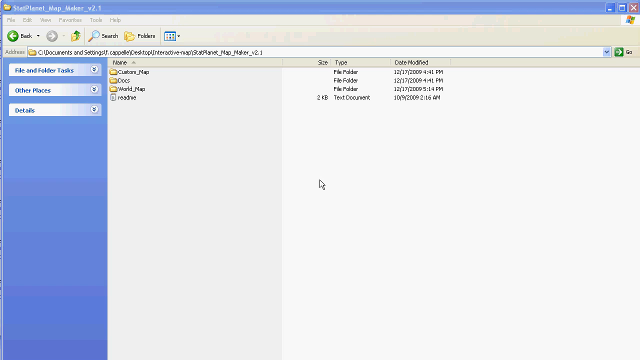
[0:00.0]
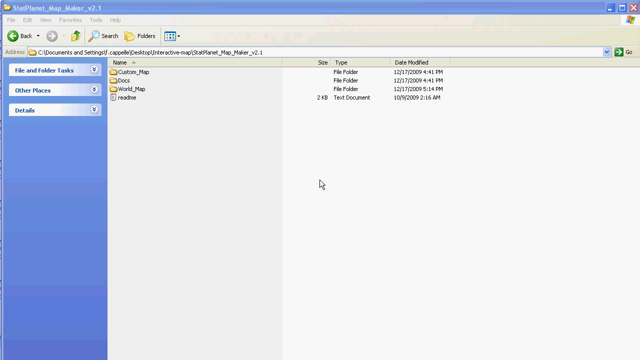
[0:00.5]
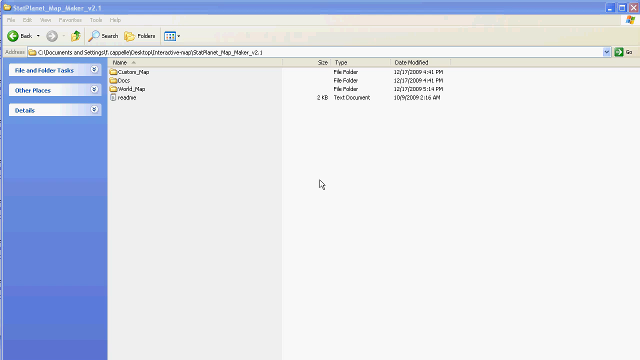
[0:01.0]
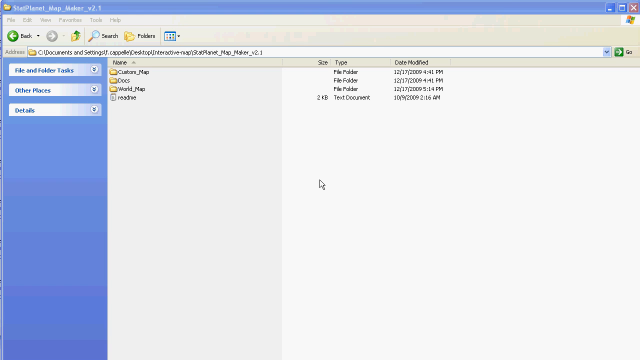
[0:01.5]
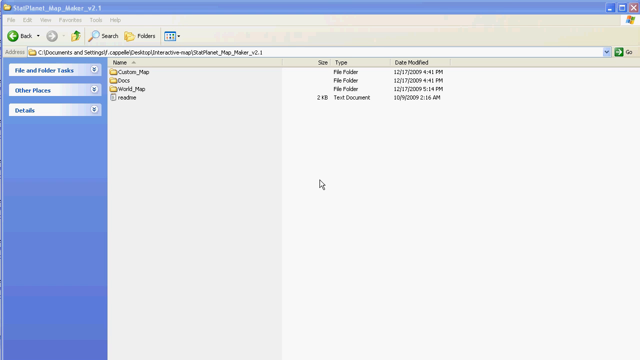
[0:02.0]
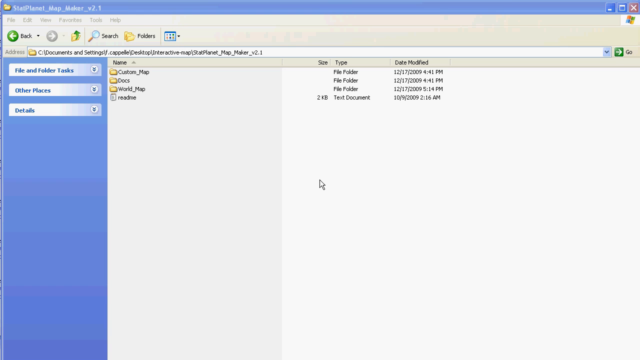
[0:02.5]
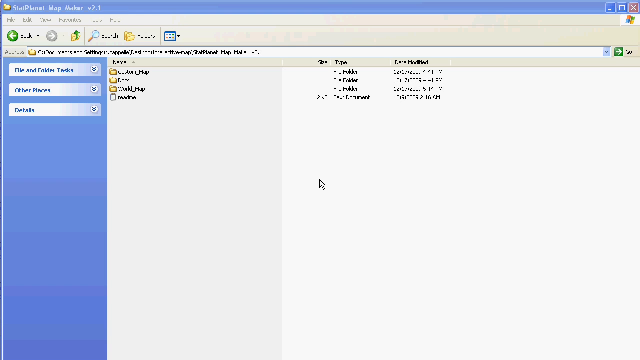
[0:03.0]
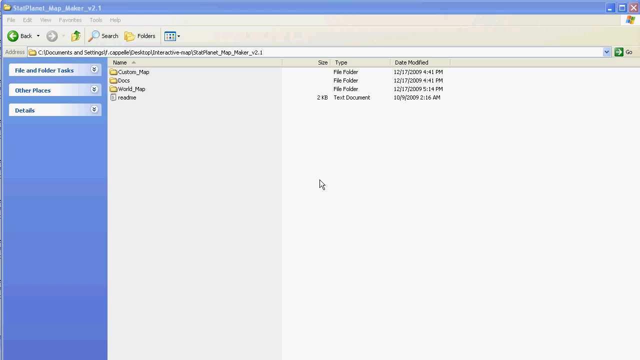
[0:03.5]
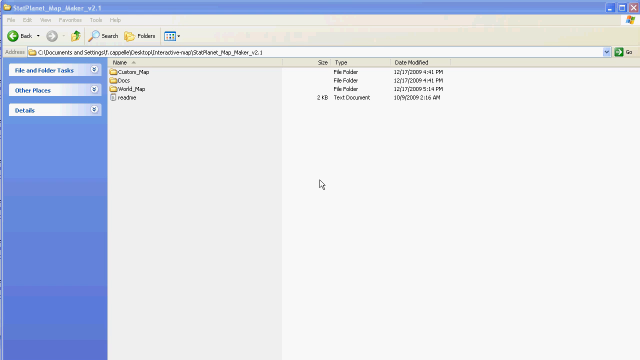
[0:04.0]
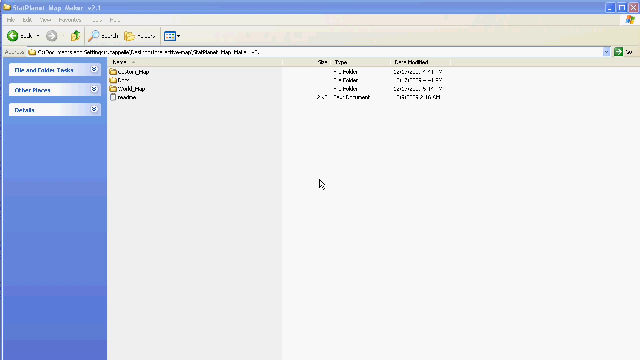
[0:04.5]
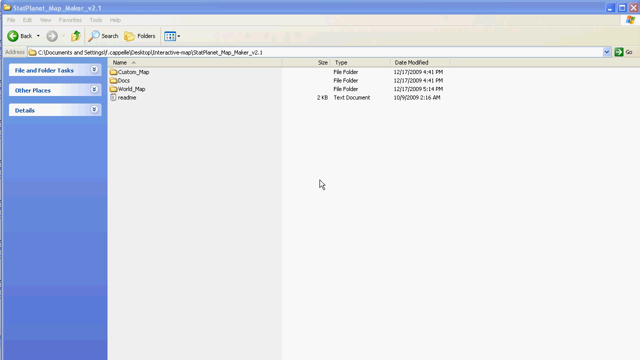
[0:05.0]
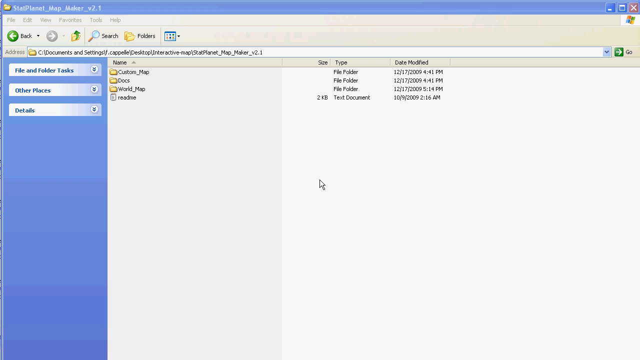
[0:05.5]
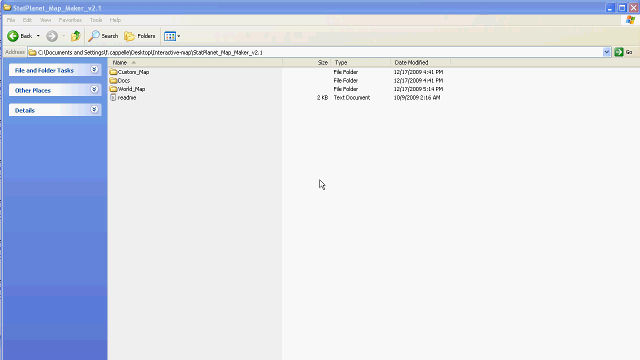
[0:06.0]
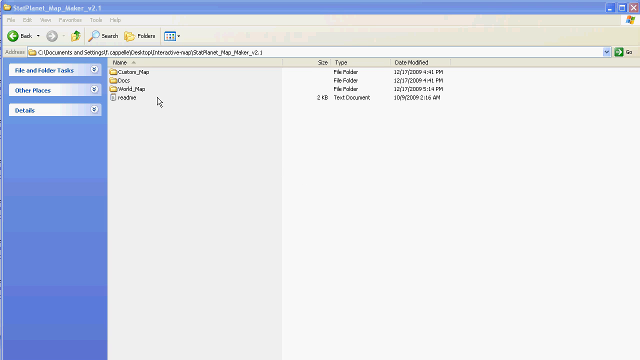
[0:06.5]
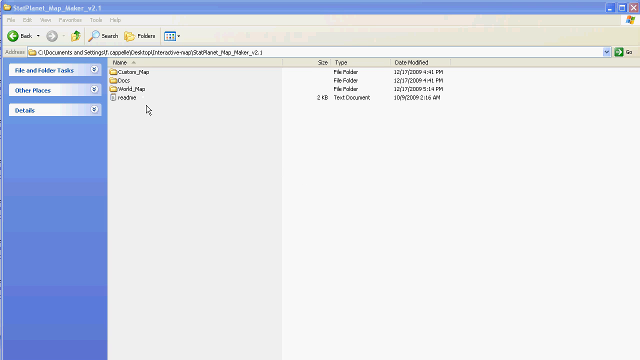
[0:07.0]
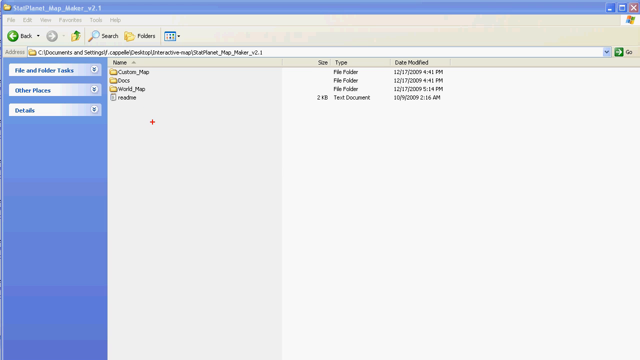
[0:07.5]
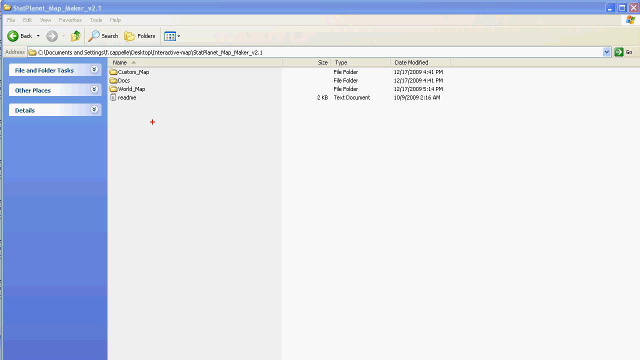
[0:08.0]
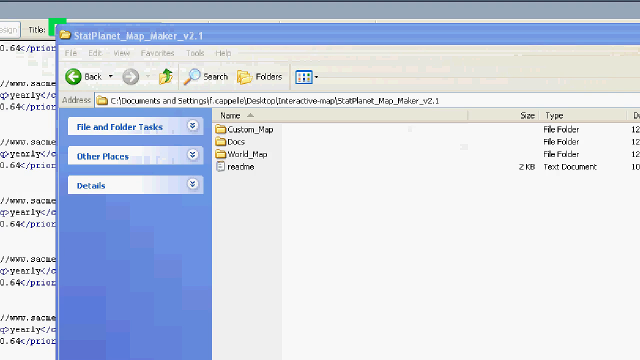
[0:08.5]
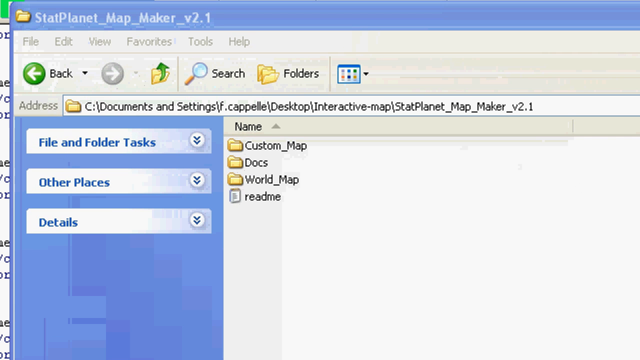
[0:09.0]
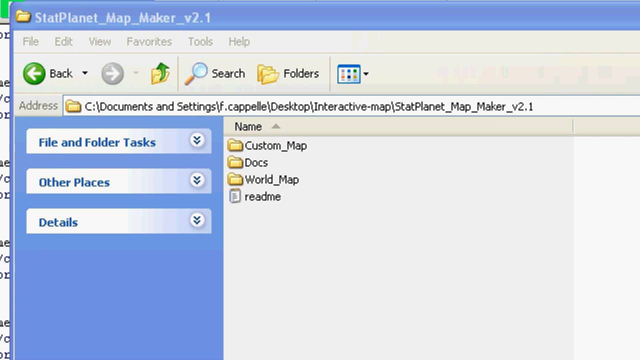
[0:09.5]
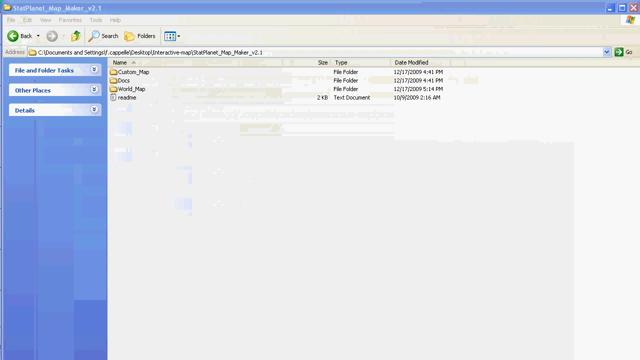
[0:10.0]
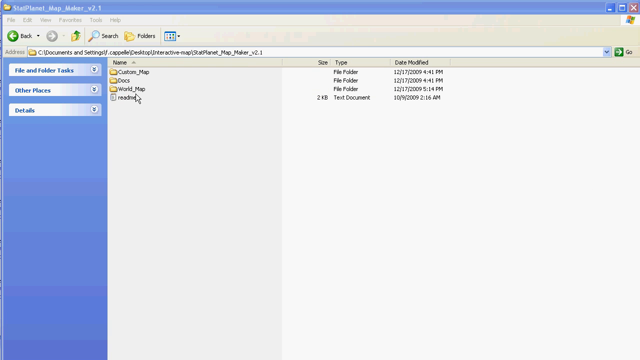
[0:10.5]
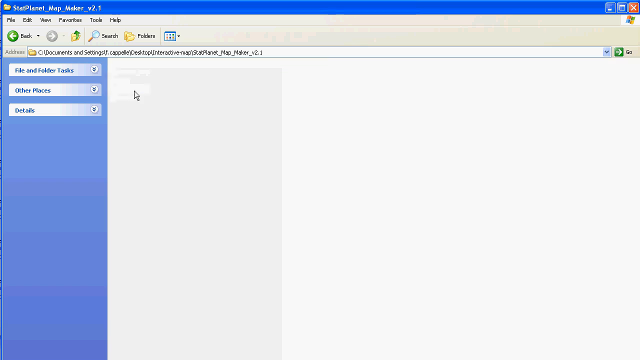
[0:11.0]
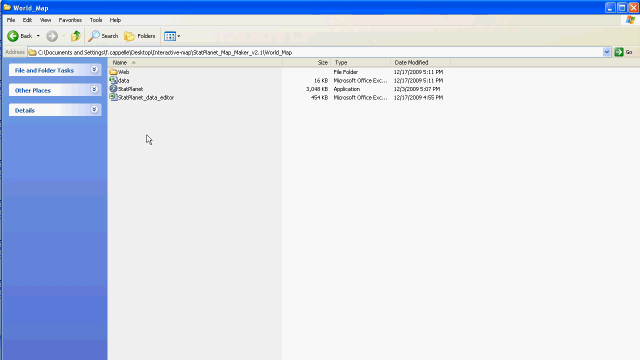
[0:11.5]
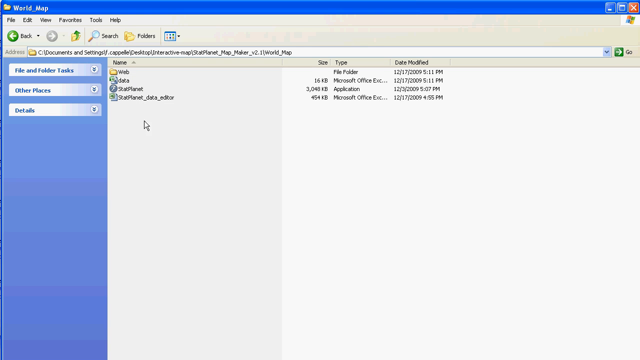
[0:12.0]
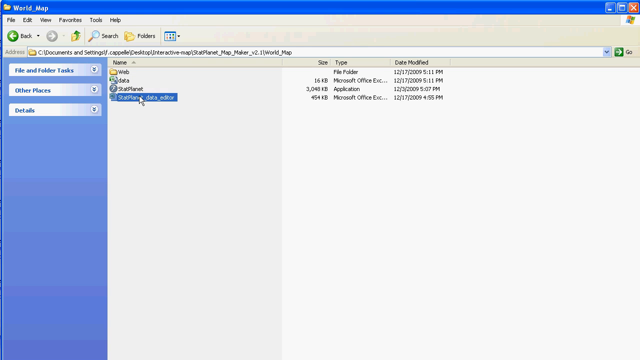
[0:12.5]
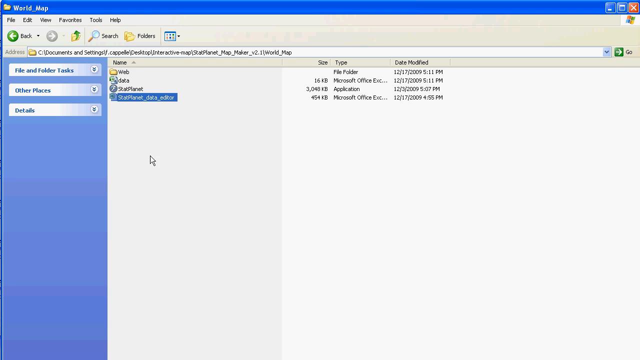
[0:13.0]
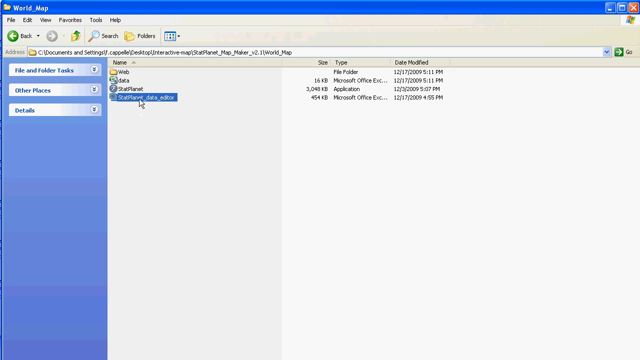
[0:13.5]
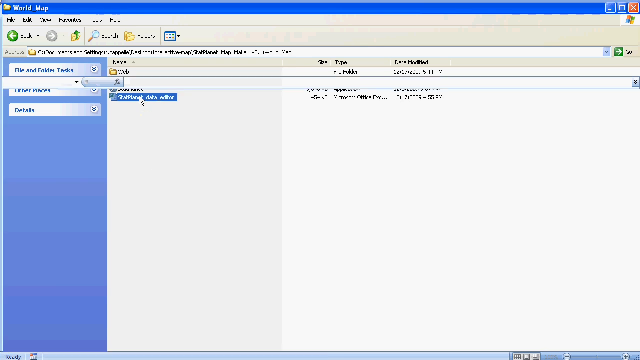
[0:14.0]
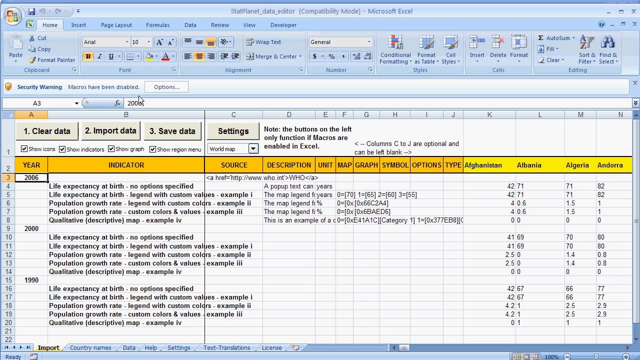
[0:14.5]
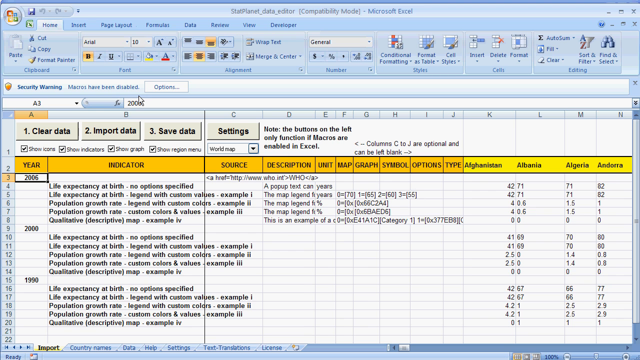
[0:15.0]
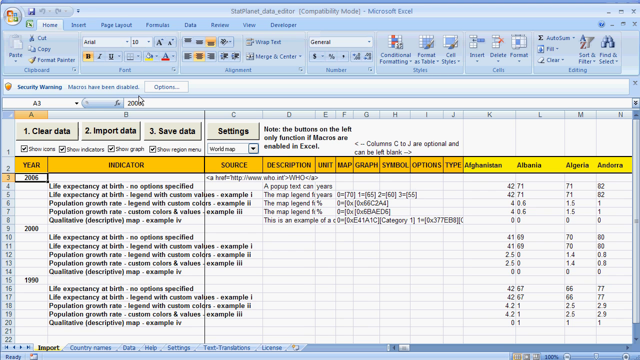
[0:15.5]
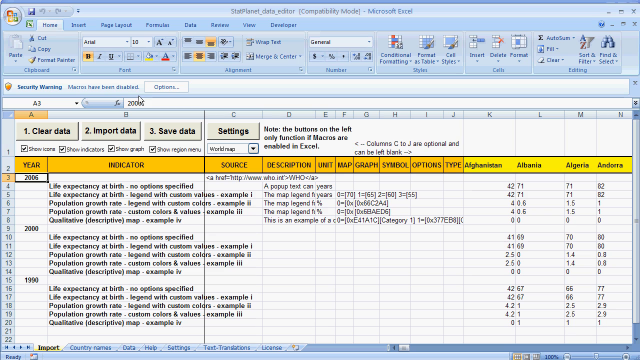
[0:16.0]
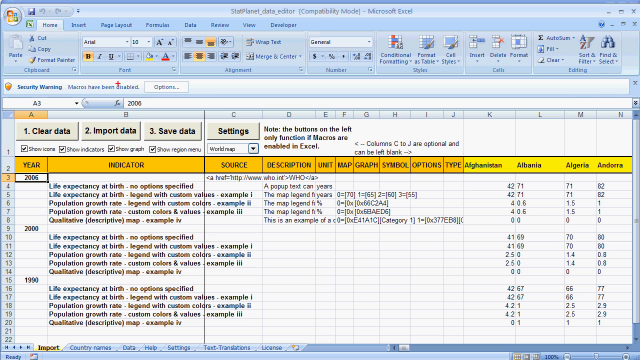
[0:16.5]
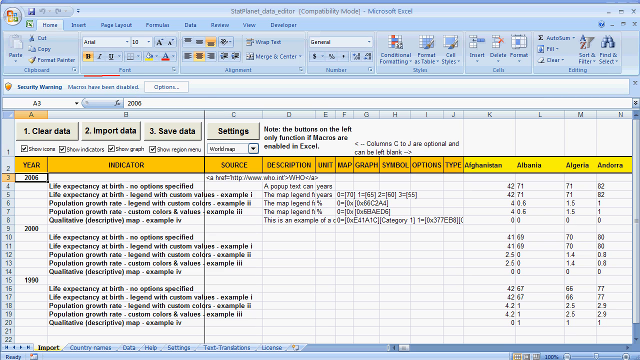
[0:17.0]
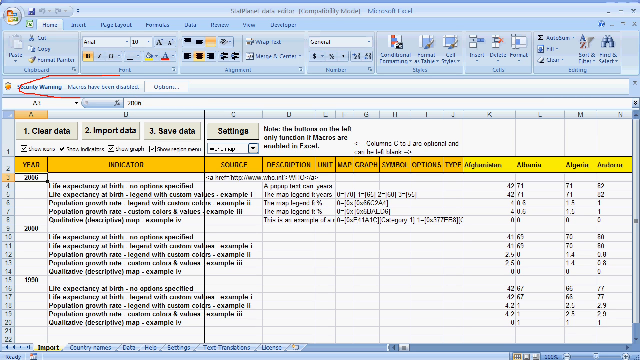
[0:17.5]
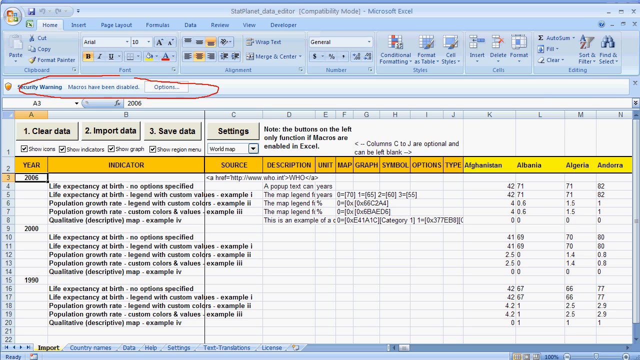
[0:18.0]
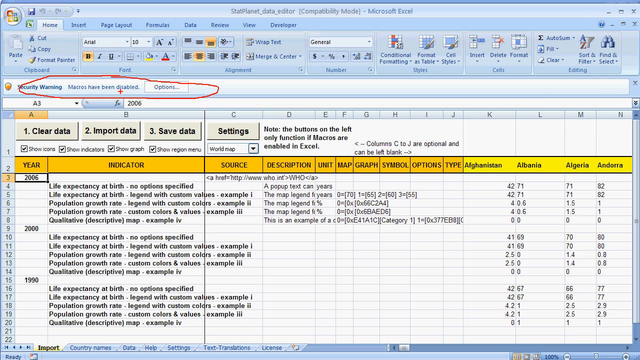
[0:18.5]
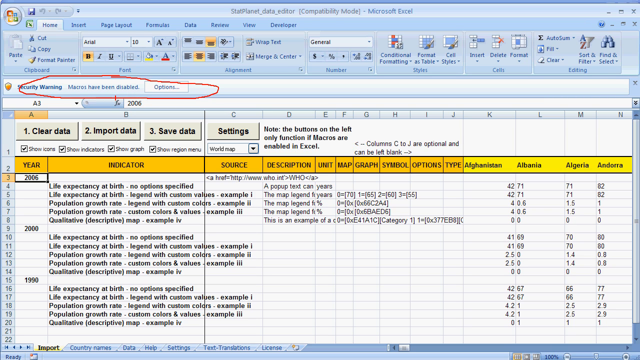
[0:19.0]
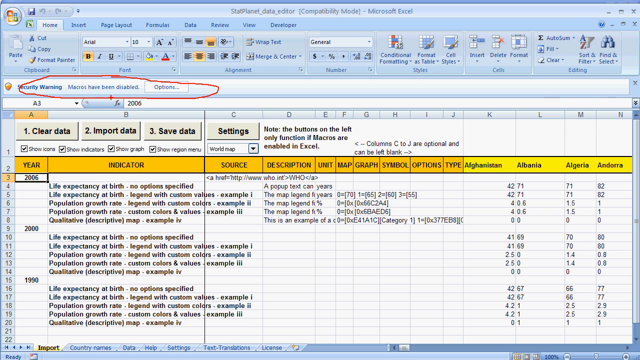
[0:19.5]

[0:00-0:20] Someone looks into a file folder on a computer and clicks into some subfolders; the words "Custom Pro" appear to be visible. The folder seems to contain a lot of either pictures or videos. The setting looks like a general Windows-type environment with a basic light blue and white faded background. The folder holds approximately four file folders and something else. The view zooms in on the screen as they go to click. When the folder is opened, there appear to be options to import and export files and data. A file is clicked, showing a ton of information, and a specific area of the screen is circled.